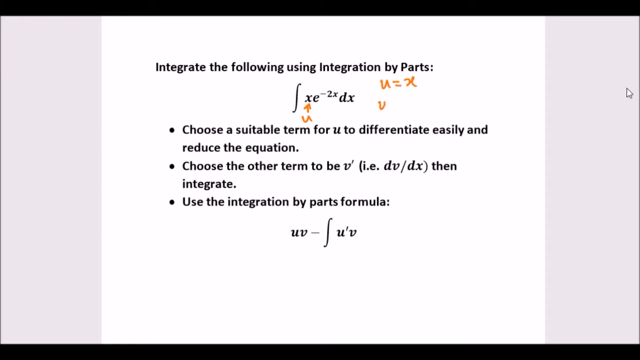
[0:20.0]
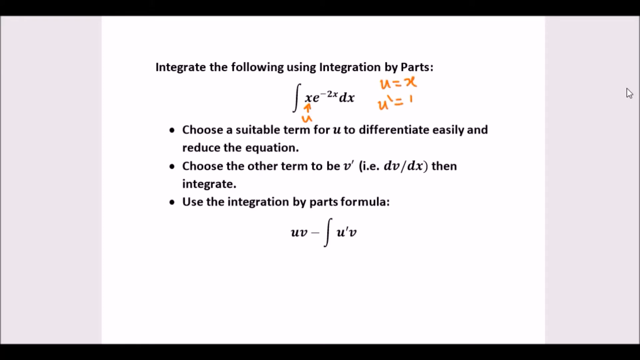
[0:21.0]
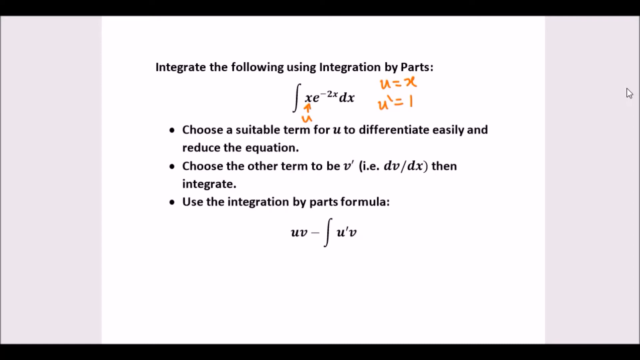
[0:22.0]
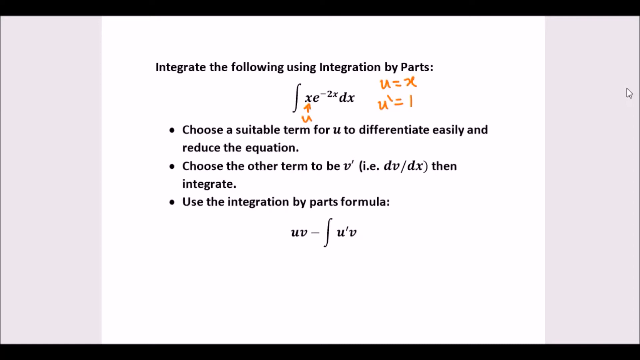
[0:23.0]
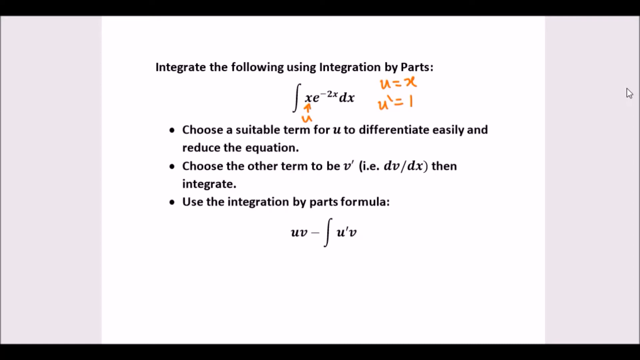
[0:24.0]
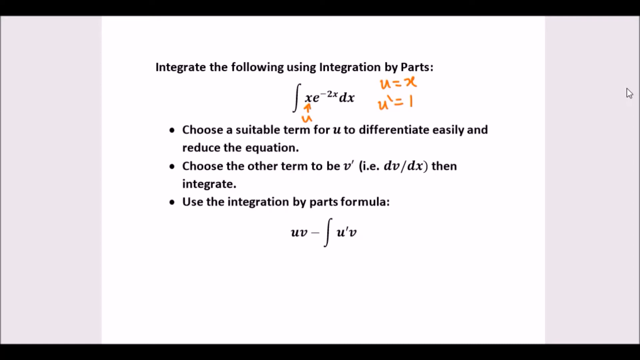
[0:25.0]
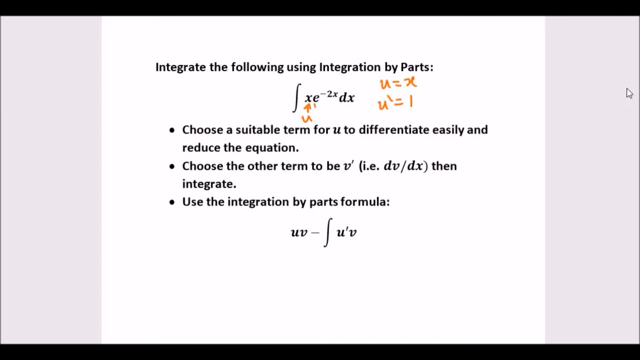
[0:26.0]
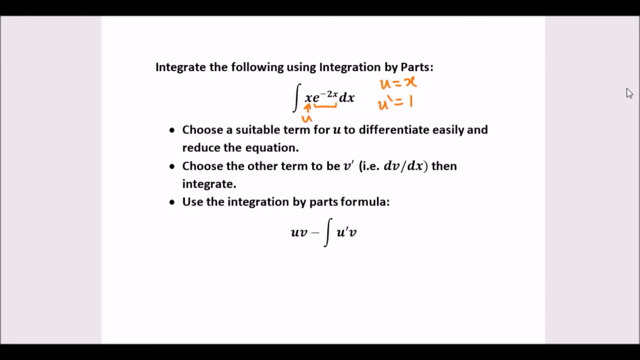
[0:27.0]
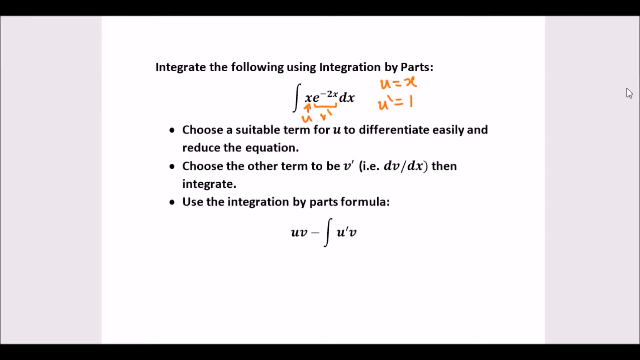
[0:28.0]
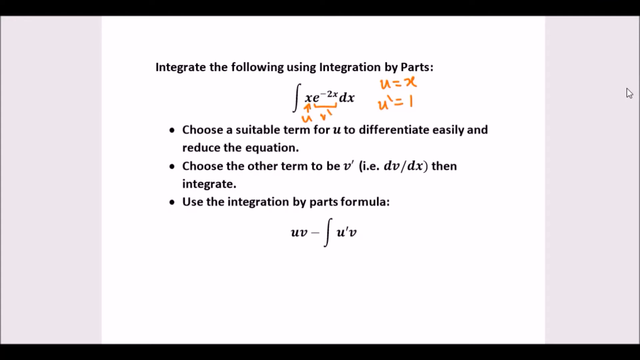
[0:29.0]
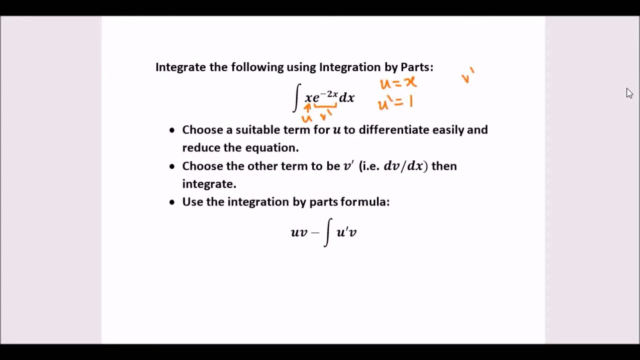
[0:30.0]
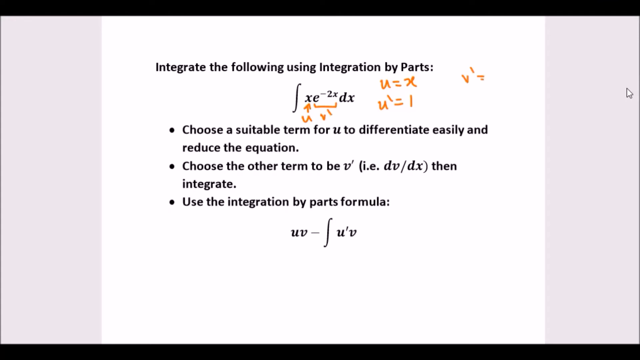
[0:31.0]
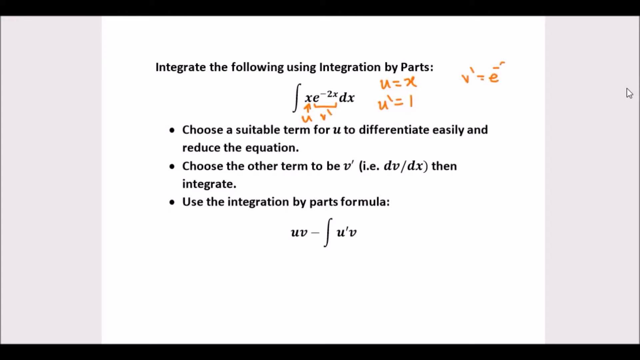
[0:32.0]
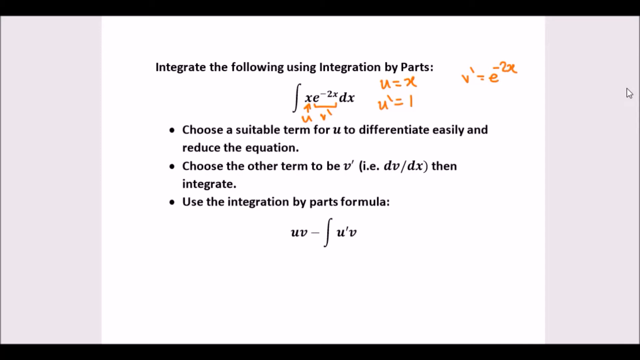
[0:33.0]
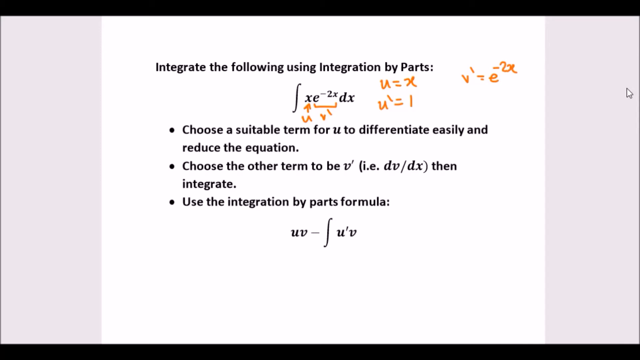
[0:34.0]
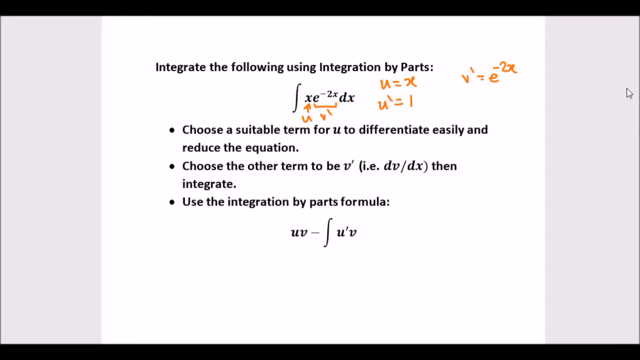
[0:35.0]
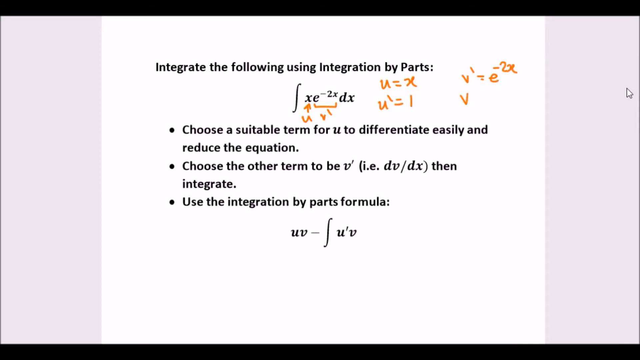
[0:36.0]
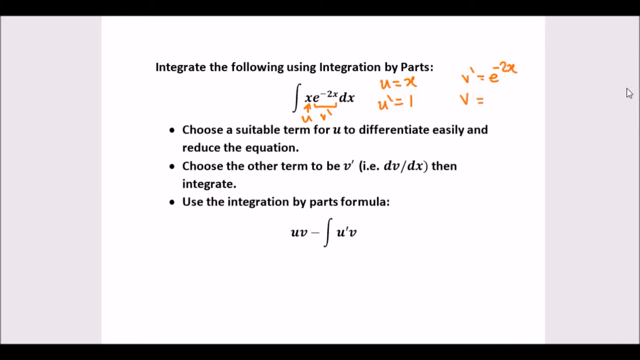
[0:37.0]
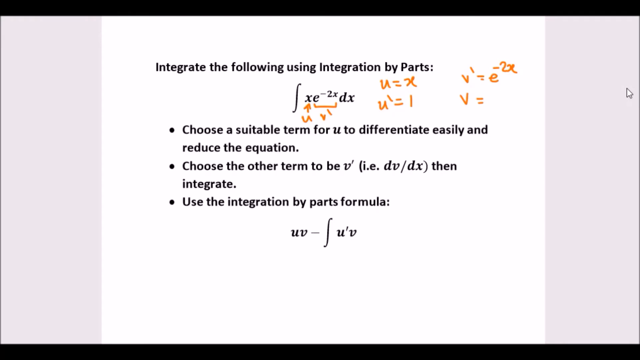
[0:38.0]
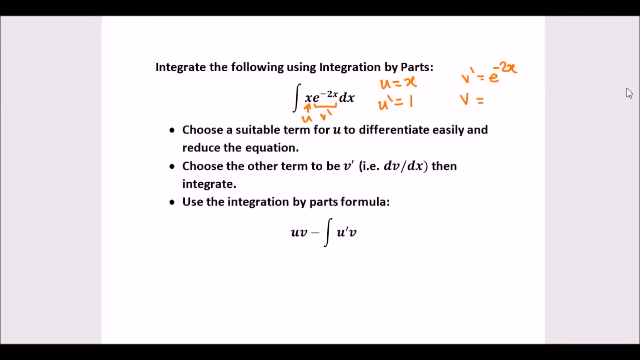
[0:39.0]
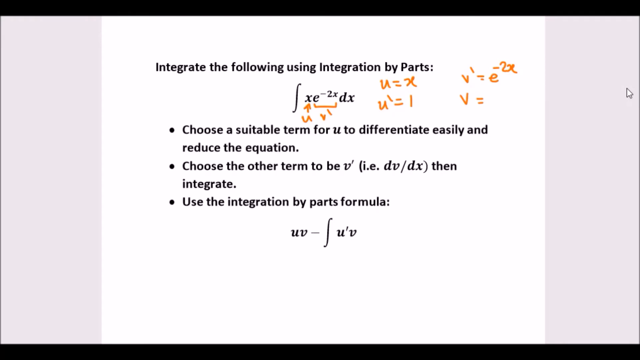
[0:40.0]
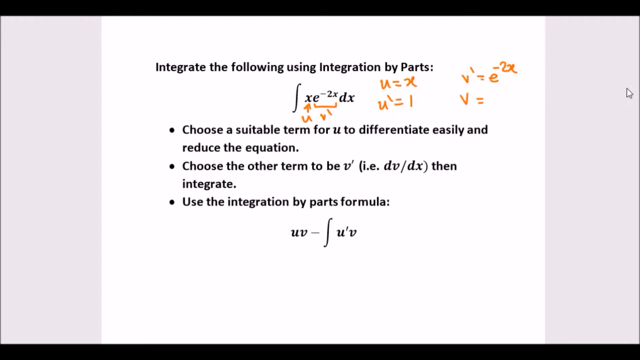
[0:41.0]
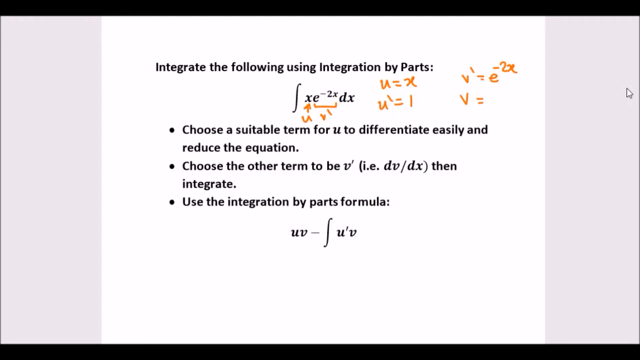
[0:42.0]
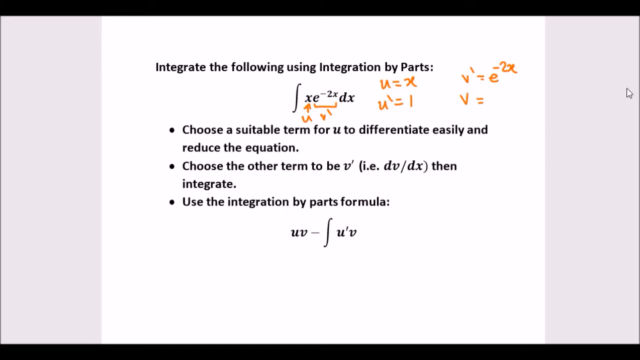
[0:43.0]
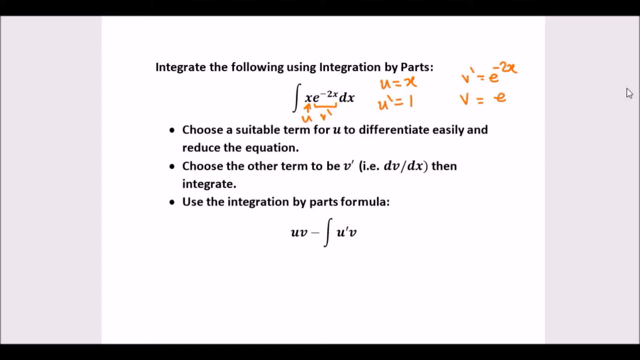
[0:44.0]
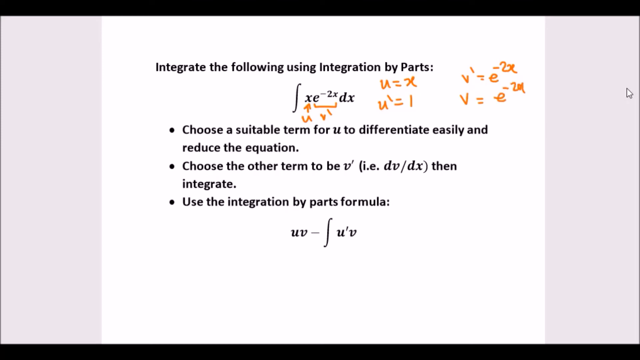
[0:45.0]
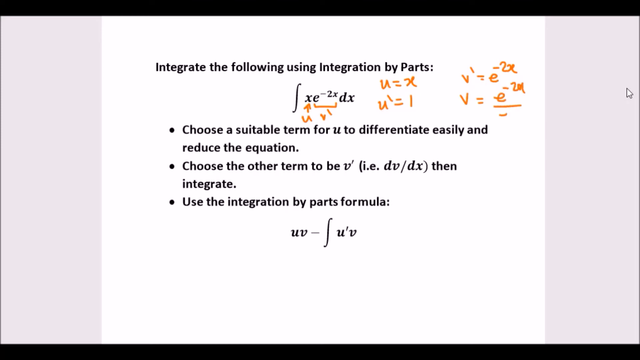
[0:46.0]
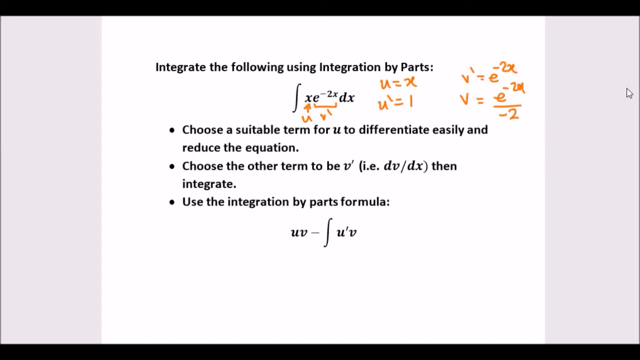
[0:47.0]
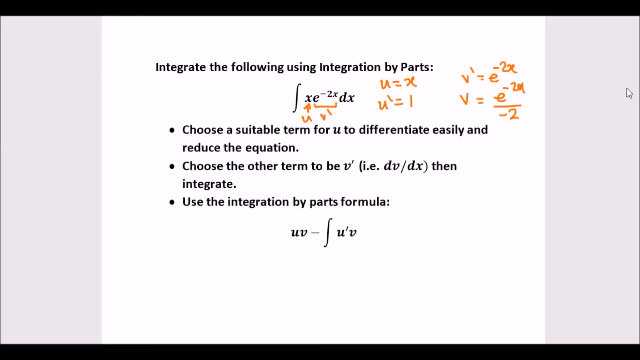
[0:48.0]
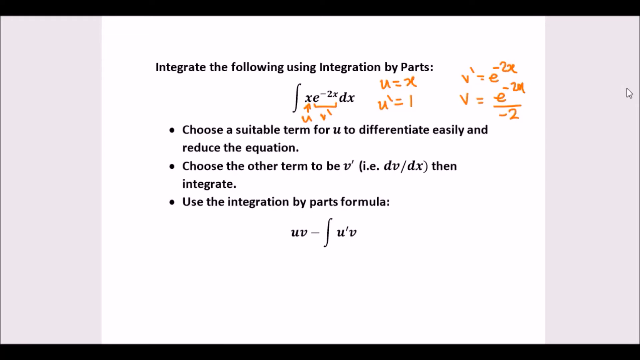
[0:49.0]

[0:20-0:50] Below u = x, the user writes u' = 1. The user marks a section of the integral as v', and further to the right writes v' = e to the minus 2x. Next the user writes "v =", pauses for a moment, and then completes it as e to the minus 2x over minus 2.